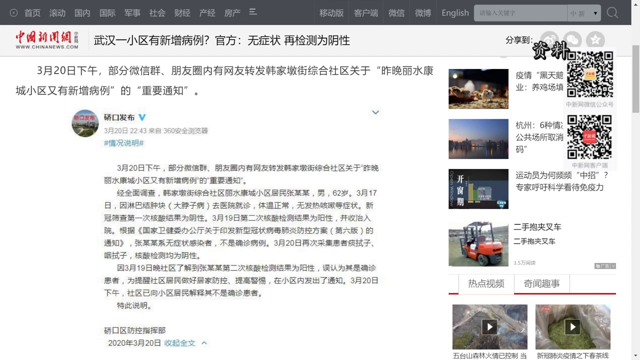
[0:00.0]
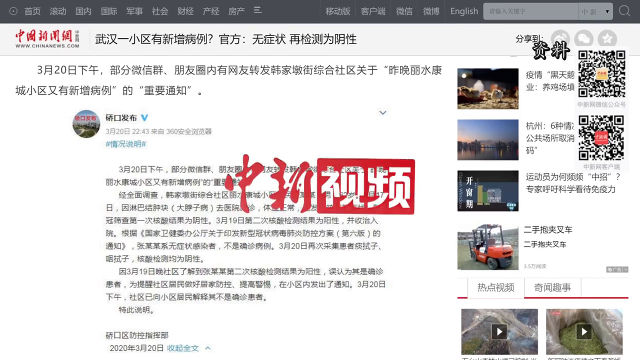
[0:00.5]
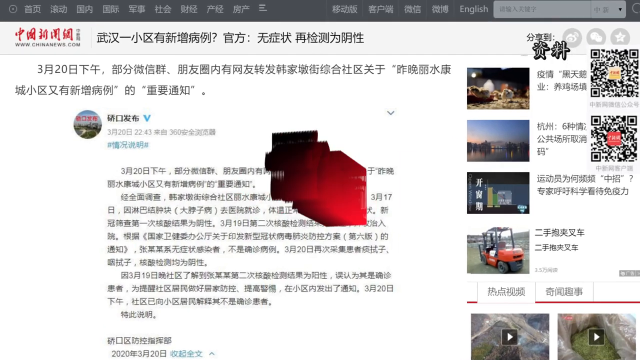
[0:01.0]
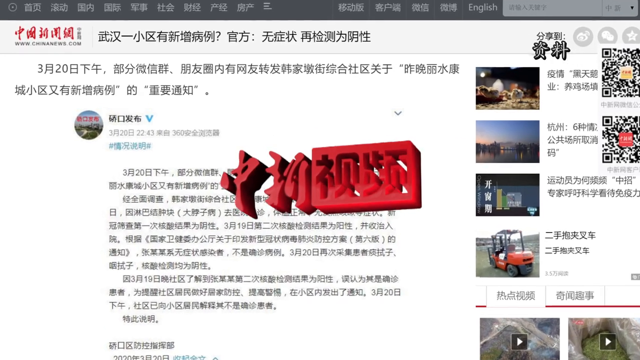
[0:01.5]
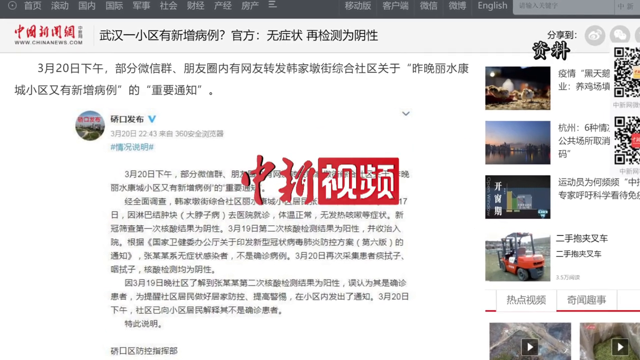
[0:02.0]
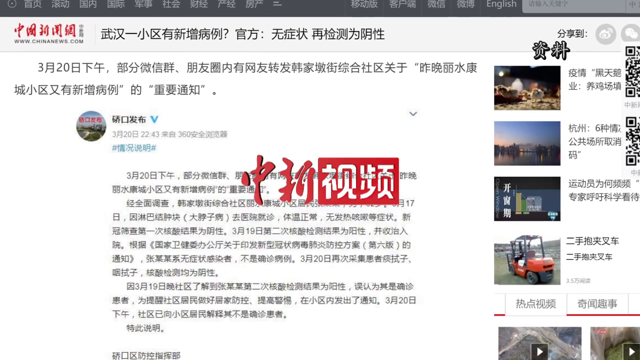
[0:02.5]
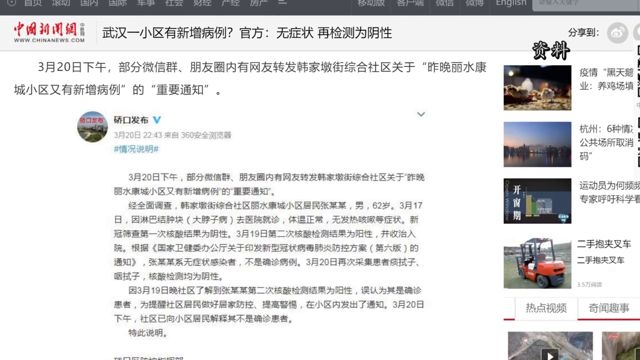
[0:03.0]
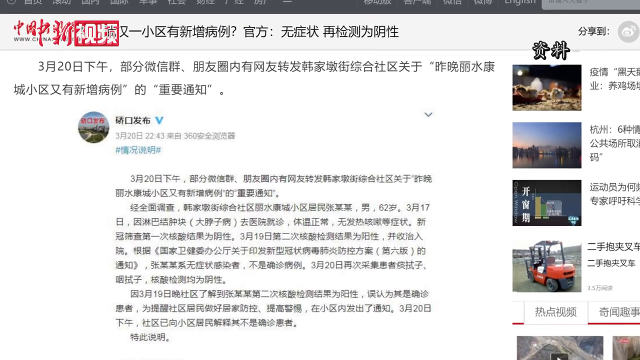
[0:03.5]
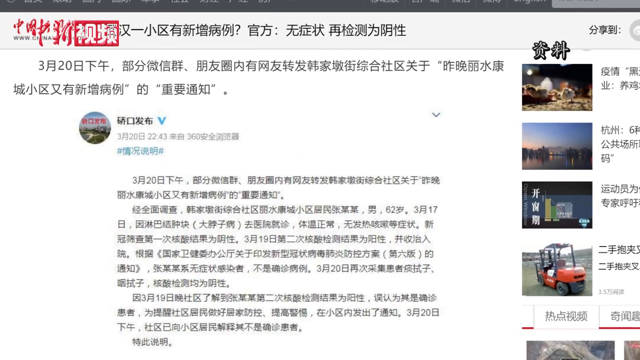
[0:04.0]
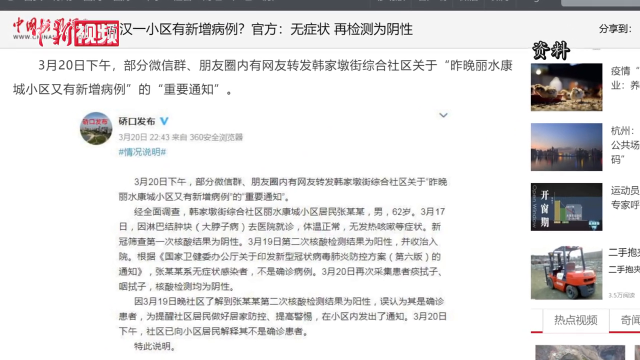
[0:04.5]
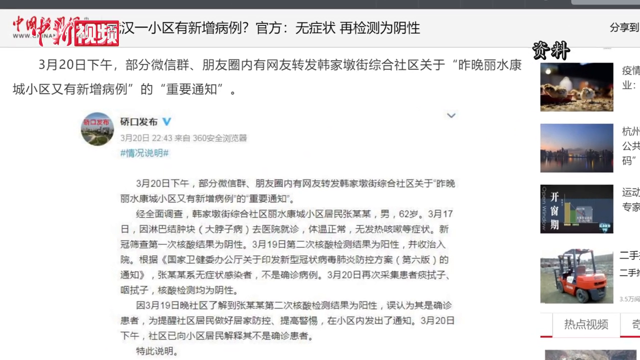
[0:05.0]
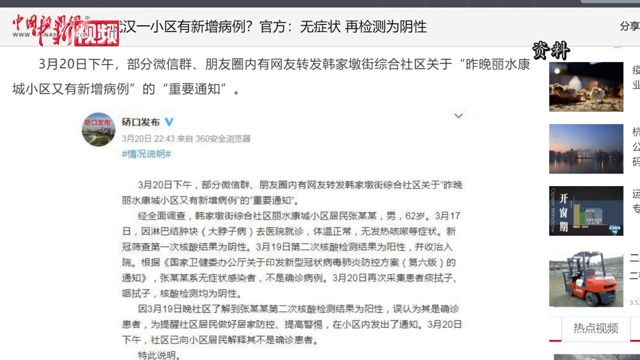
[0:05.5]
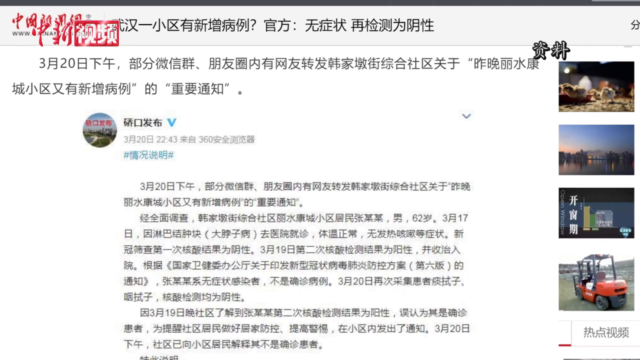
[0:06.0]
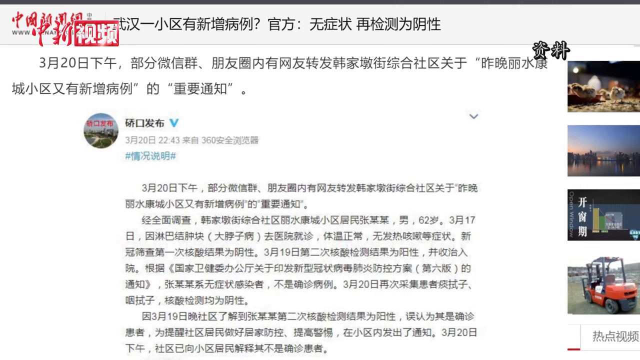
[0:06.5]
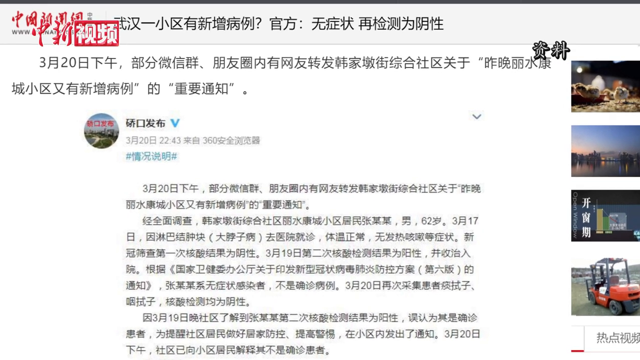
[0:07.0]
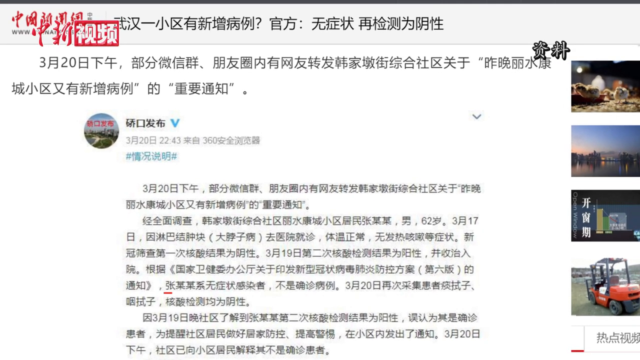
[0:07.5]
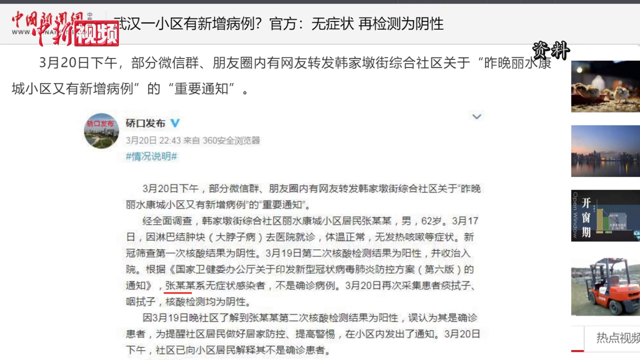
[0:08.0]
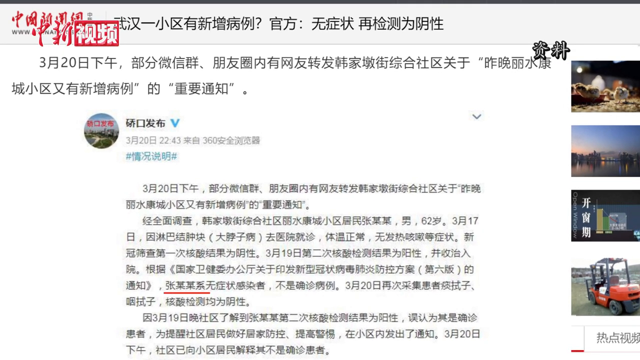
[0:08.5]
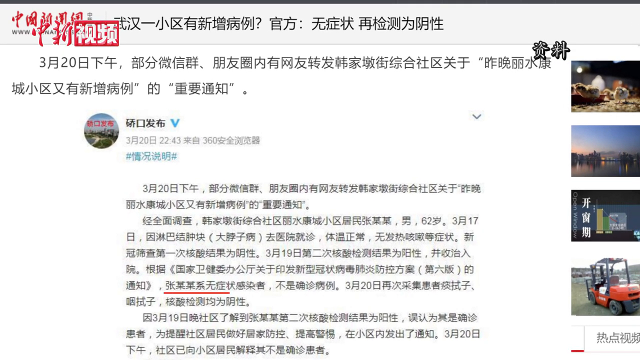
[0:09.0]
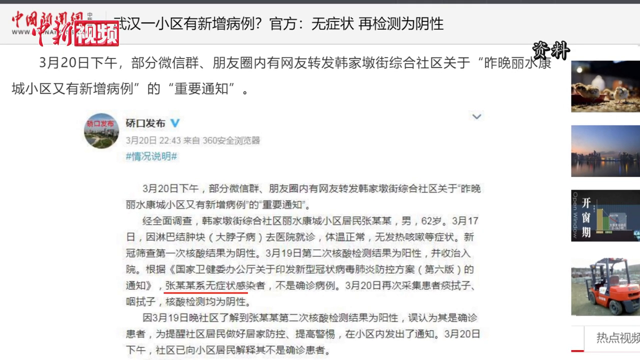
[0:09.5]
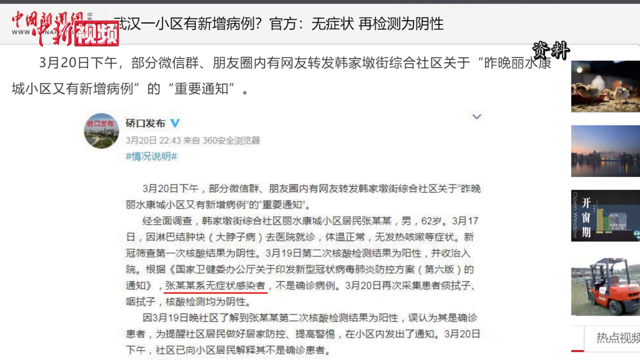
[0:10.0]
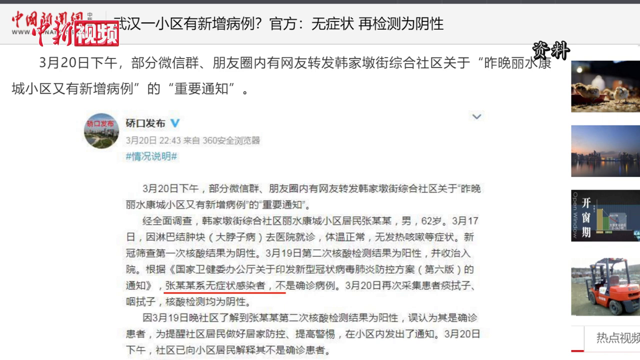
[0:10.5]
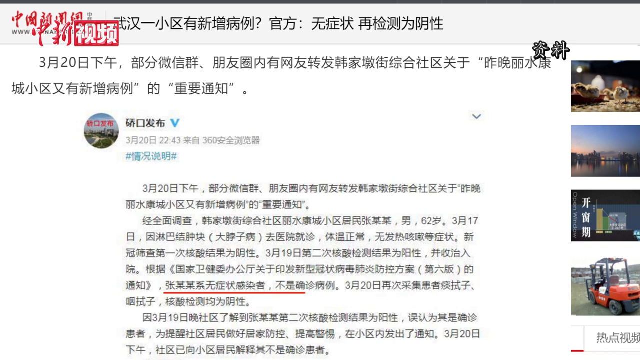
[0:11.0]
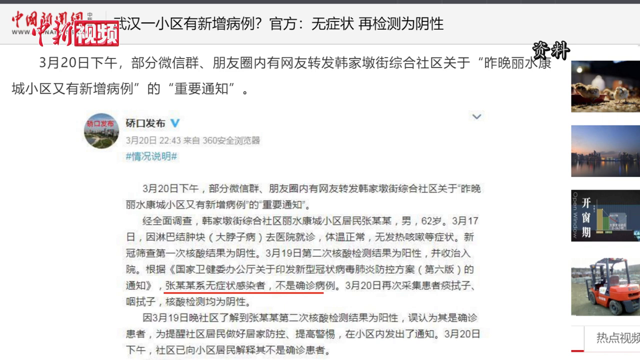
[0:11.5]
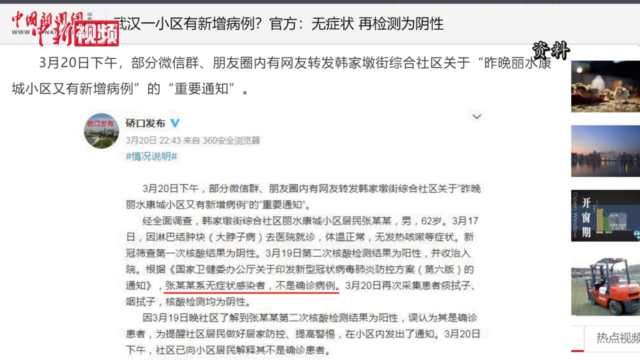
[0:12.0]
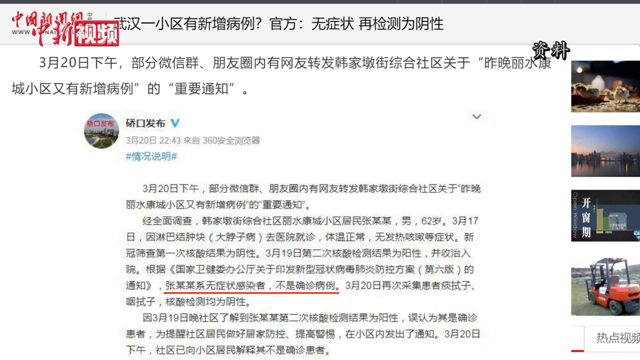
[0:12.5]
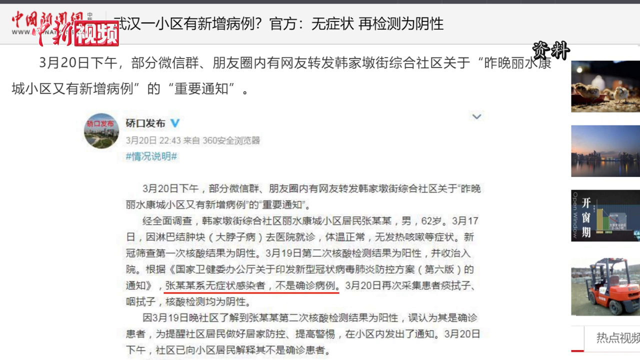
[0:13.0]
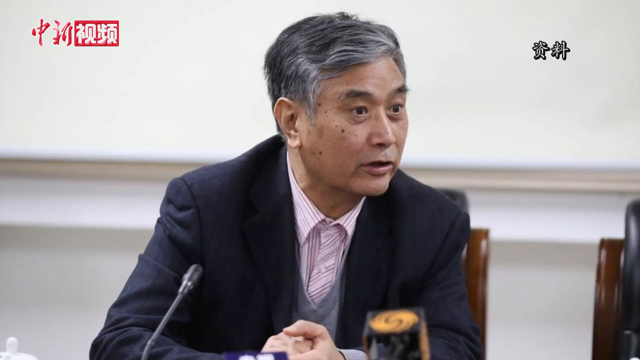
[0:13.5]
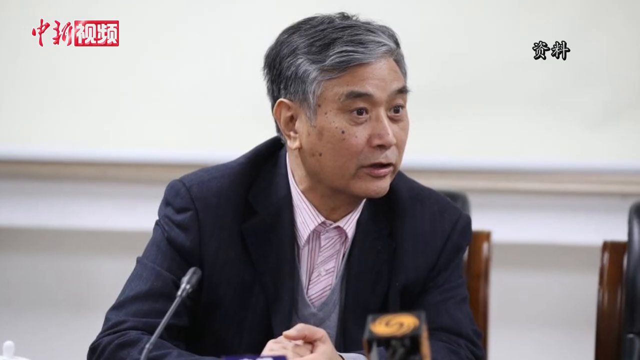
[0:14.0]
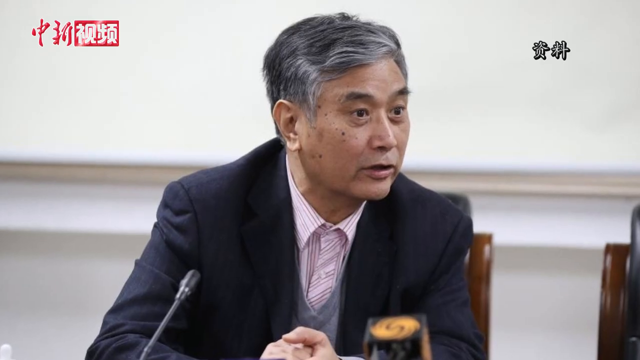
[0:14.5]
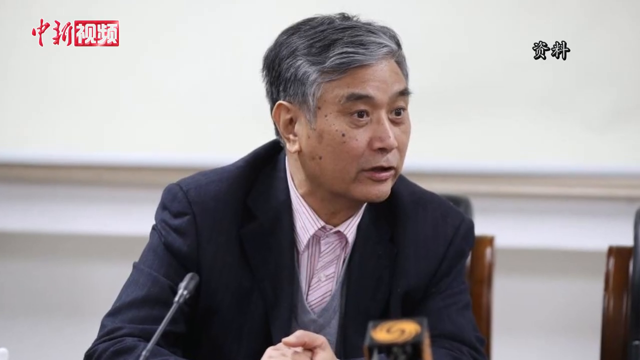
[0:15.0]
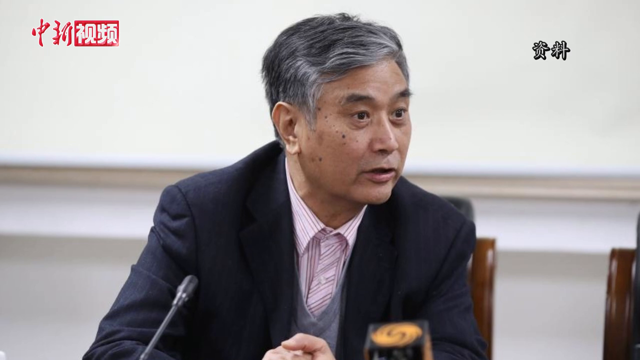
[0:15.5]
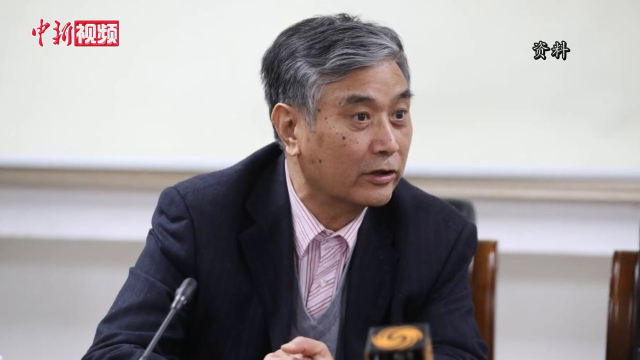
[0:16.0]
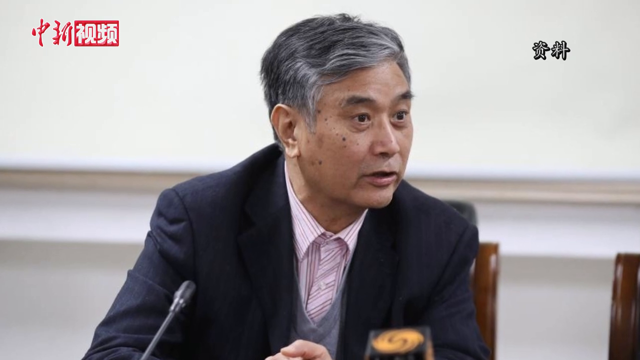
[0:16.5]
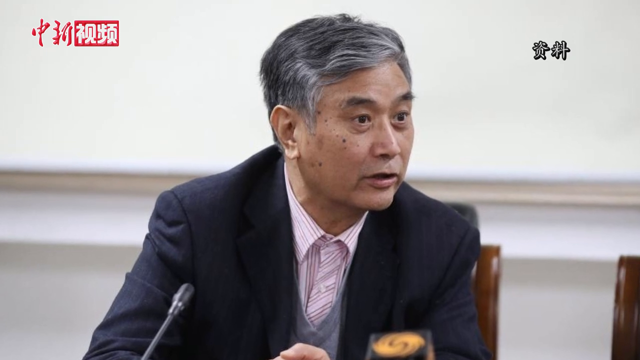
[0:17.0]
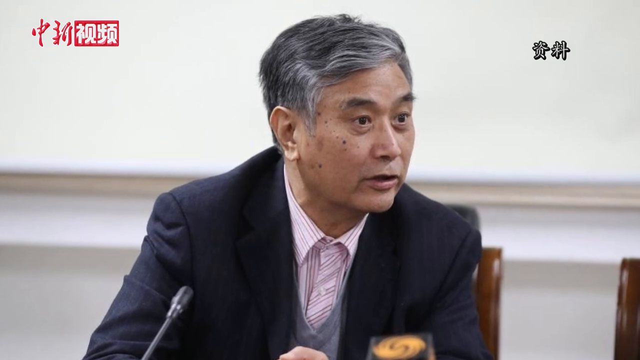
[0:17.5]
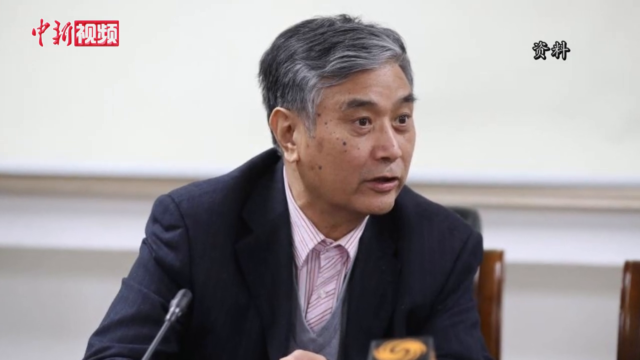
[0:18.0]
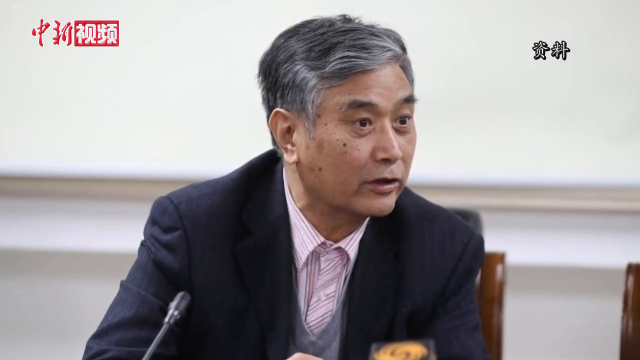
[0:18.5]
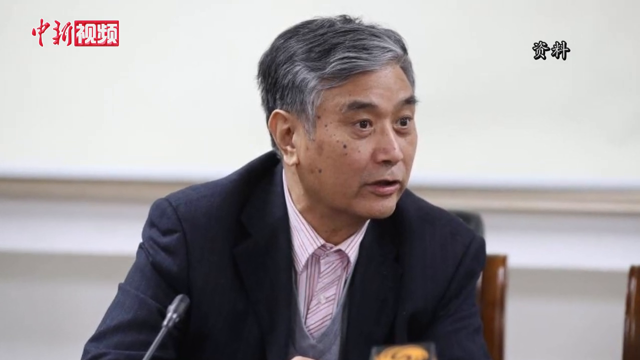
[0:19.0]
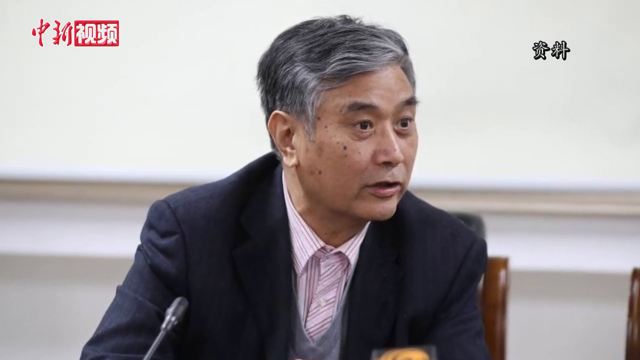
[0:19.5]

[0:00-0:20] A social media site appears on screen, somewhat in the form of Twitter but apparently not Twitter. Its text is in a foreign language, apparently Chinese characters. A set of words on the site is underlined. The video then shows a sort of business or presidential-looking man.